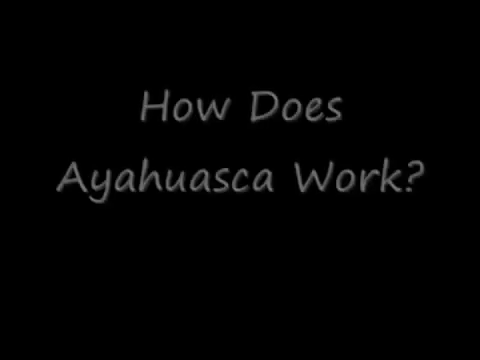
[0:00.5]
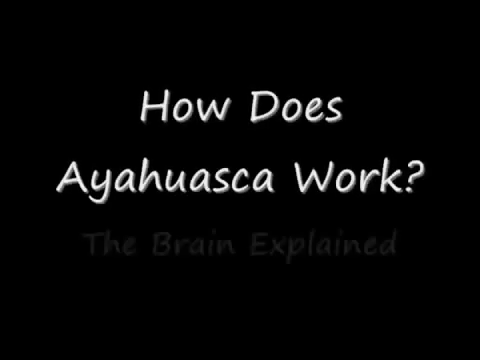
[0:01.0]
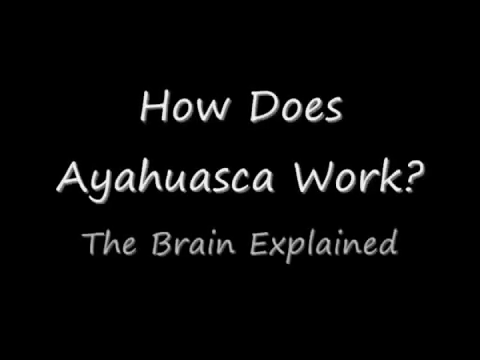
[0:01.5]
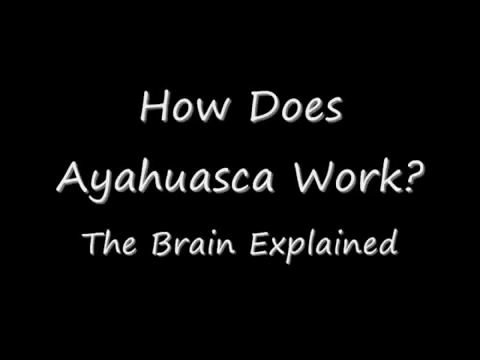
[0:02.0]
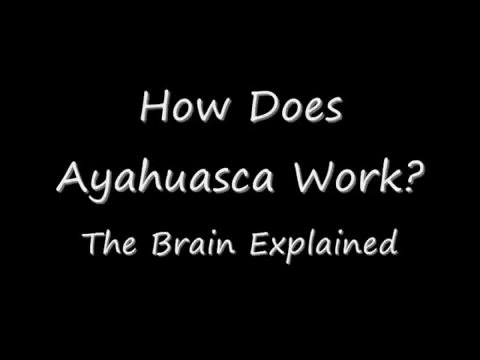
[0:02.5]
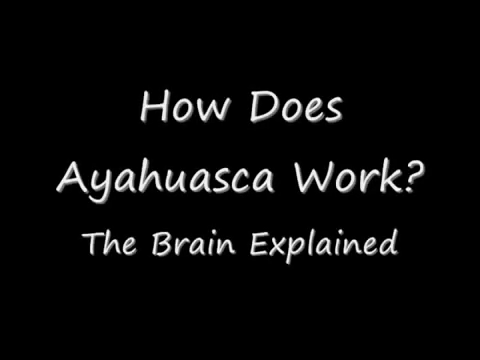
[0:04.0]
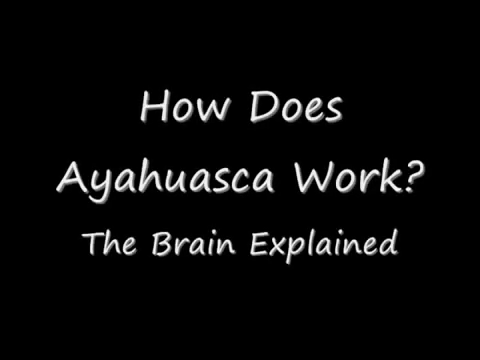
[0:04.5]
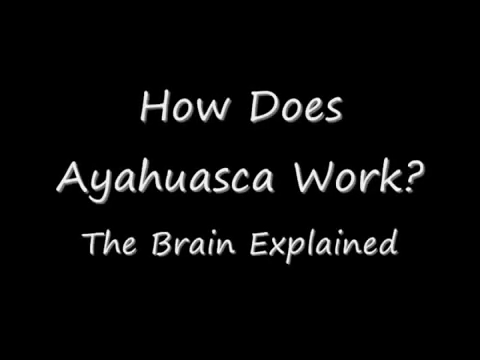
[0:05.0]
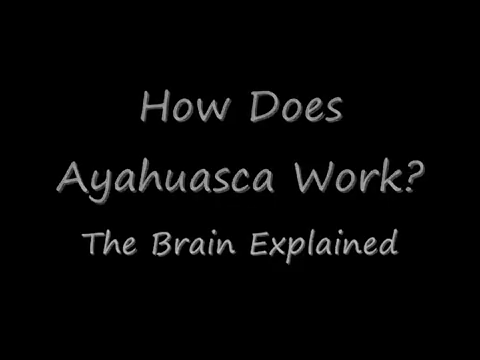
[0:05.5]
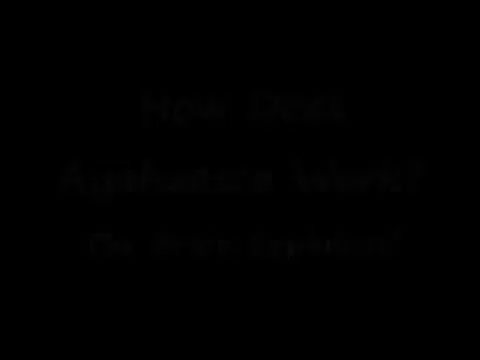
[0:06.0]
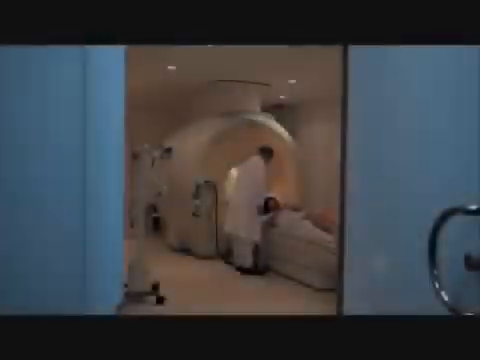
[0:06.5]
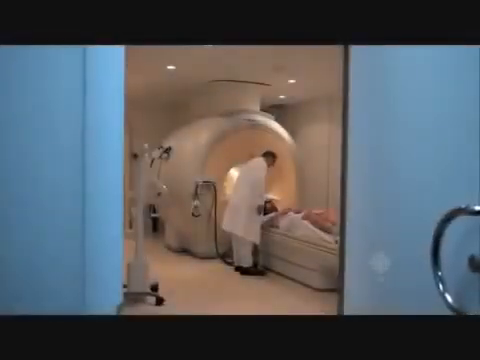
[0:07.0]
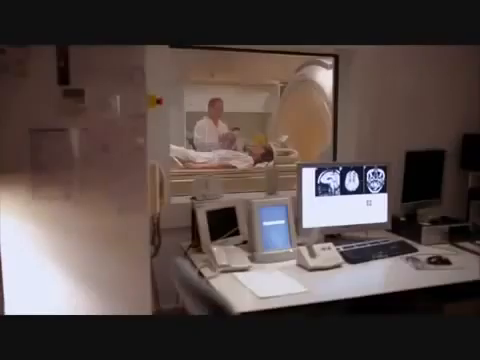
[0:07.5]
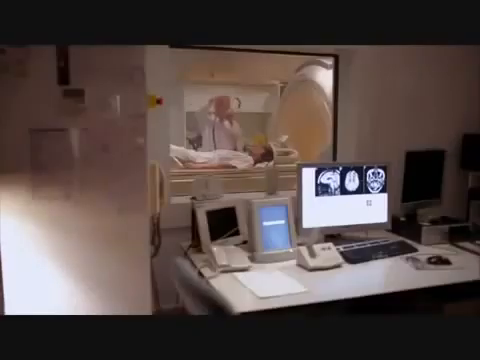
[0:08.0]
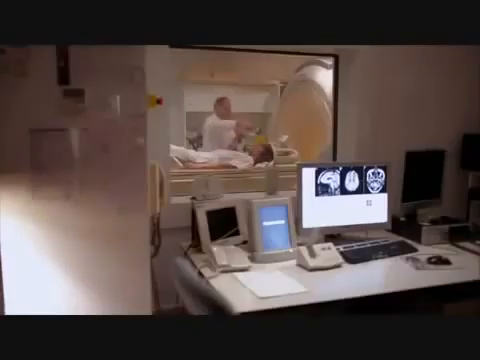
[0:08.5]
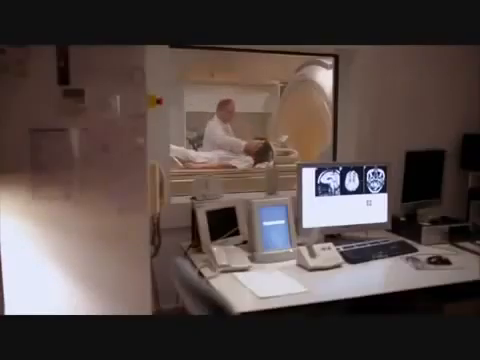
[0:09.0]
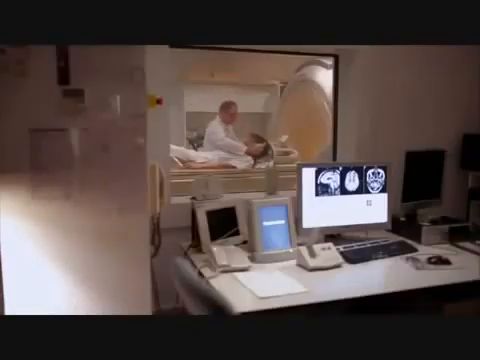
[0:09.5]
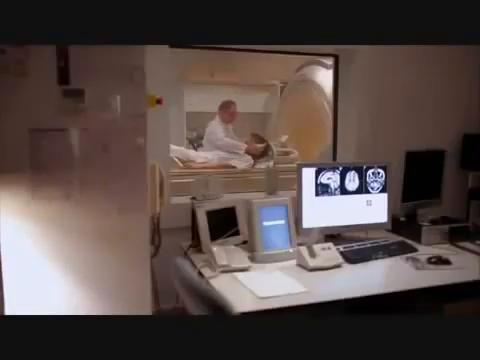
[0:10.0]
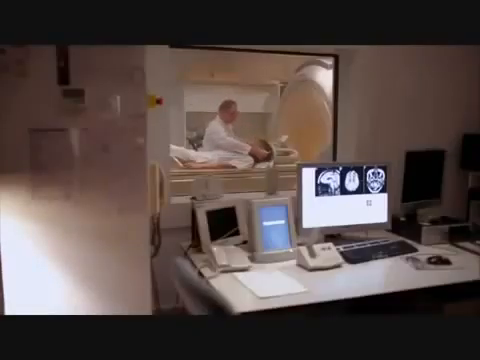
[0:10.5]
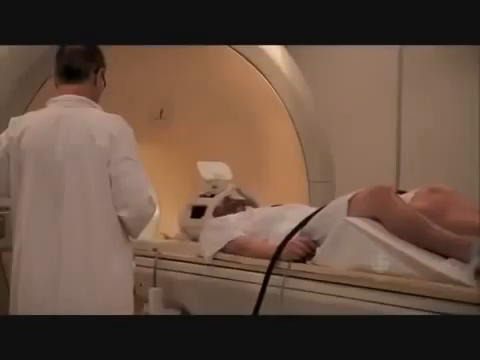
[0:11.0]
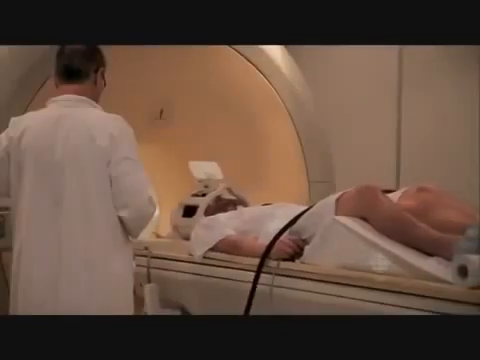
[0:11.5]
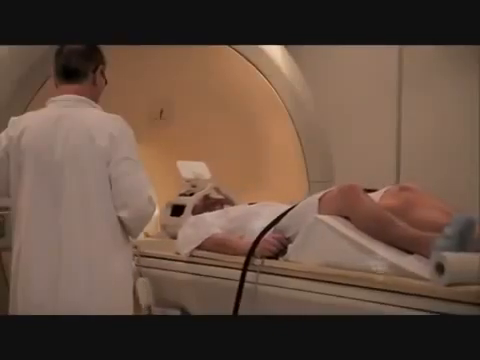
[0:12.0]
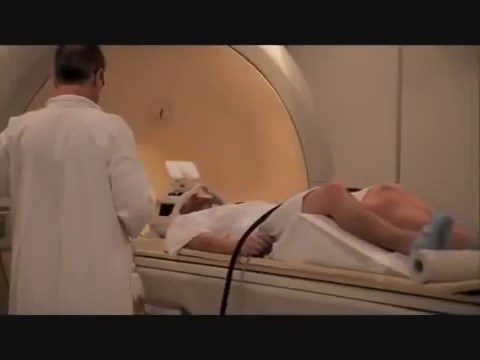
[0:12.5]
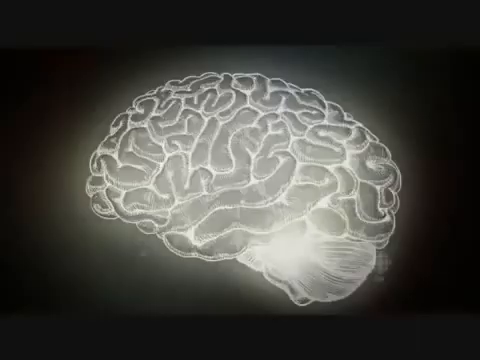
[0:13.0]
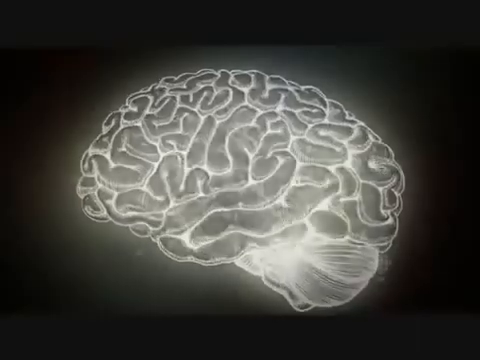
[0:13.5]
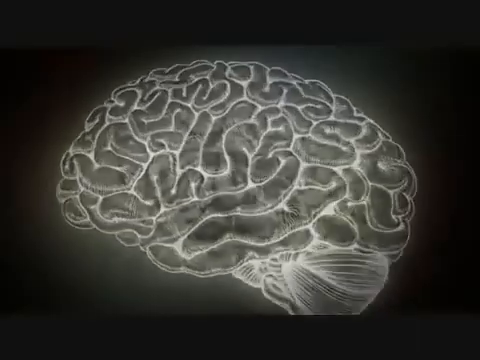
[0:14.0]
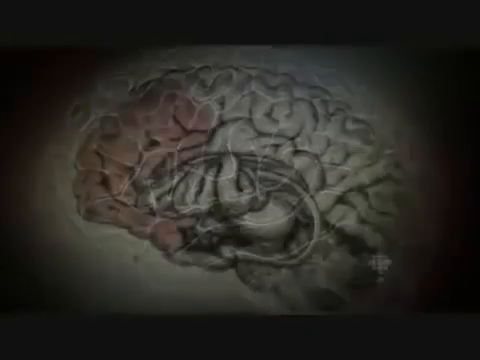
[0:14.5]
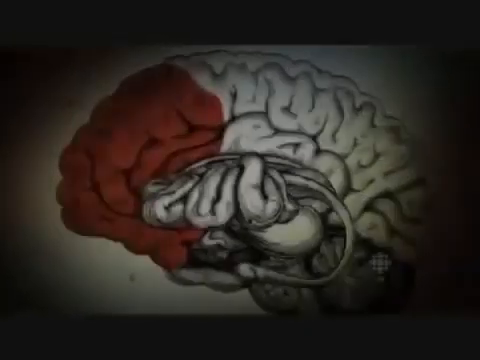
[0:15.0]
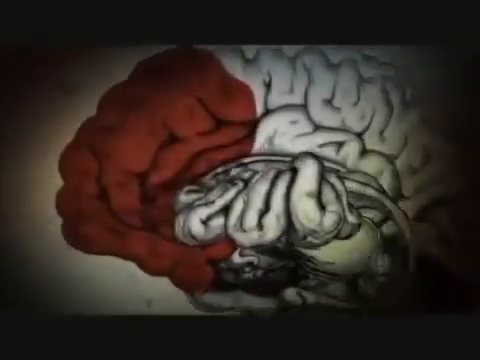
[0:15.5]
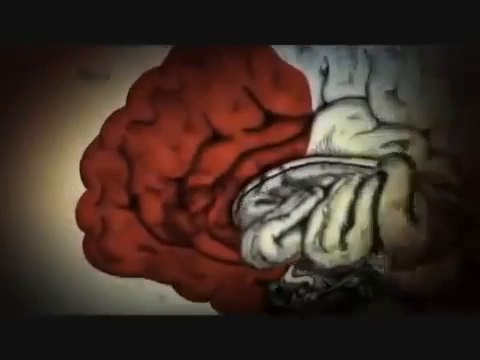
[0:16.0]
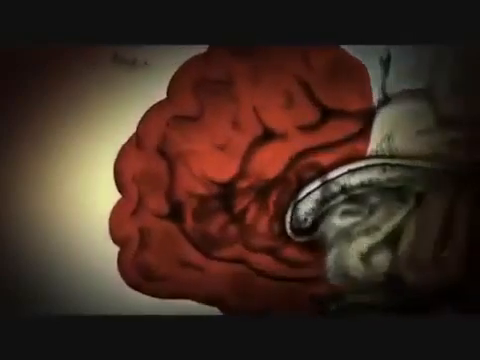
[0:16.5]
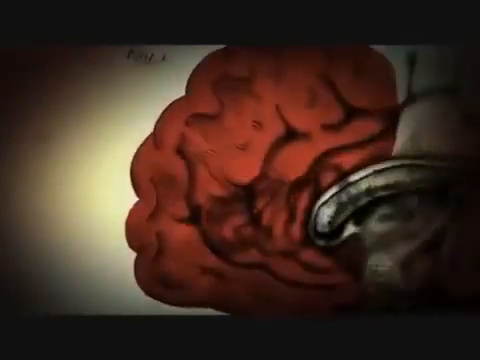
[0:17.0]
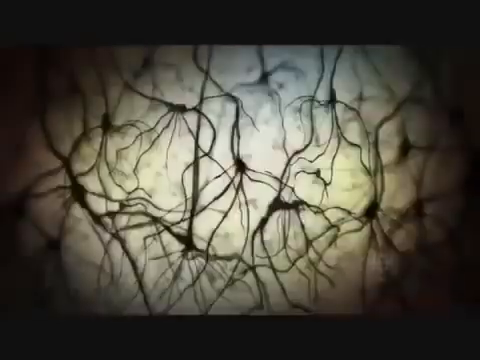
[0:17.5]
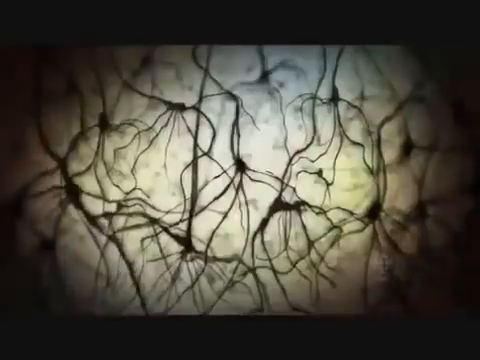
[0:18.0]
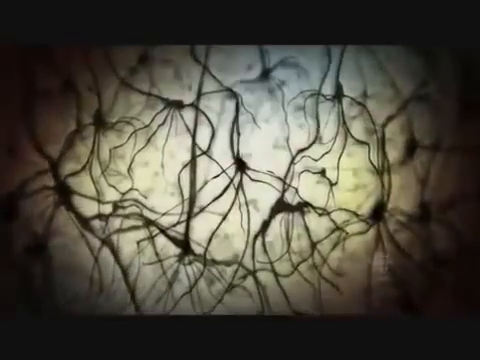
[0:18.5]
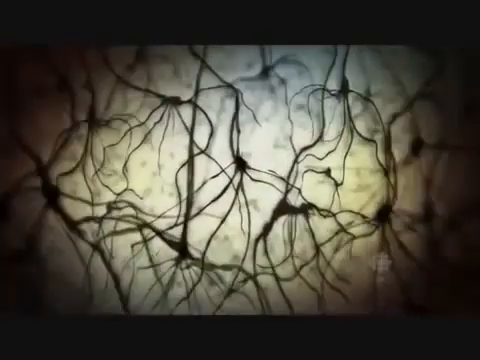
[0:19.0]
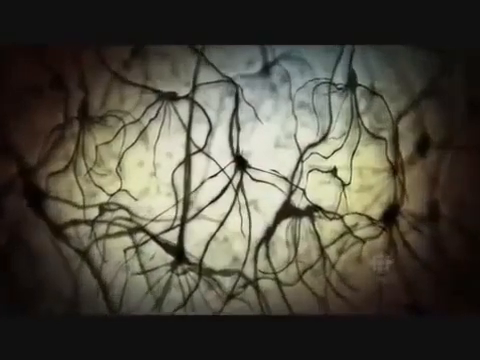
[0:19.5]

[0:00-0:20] Against an all-black, dark background, the words "How does ayahuasca work? The brain explained." appear in the center. Next, a person is lying down with a doctor next to them, about to be entered into an MRI machine, and the doctor puts something over the person's head. In a very close shot, the person slowly moves toward the inside of the MRI machine. Their knees are bent, positioned upward and elevated, they are lying down, there is a black strap in the middle of them, and they have a white device over their head. A doctor is on the left side. Then a very bright image of the brain appears, the view goes to the left, and many neurons of the brain appear.